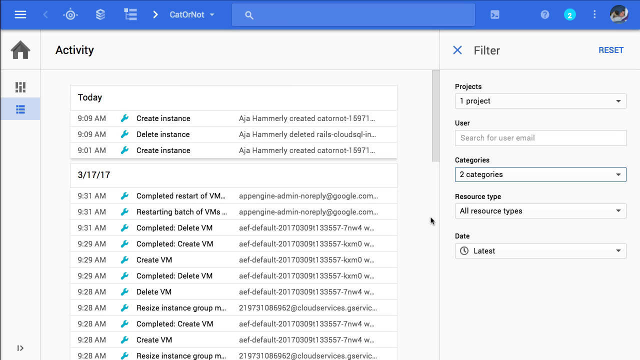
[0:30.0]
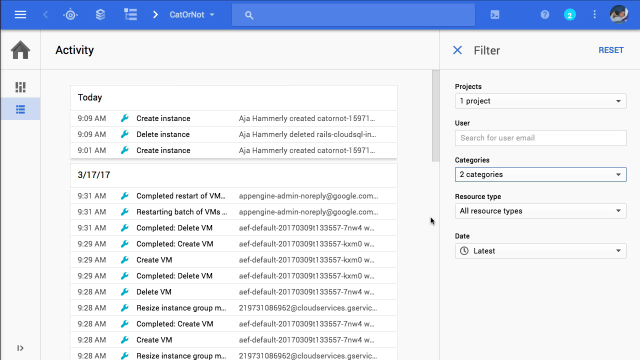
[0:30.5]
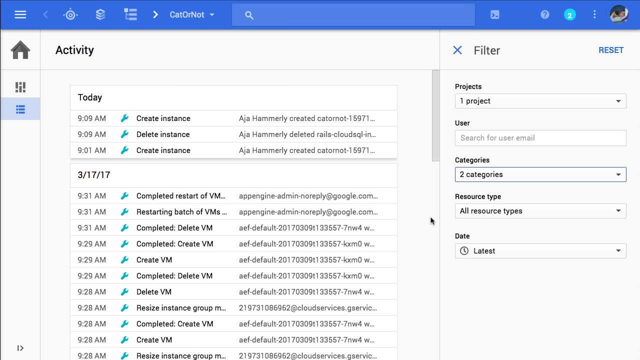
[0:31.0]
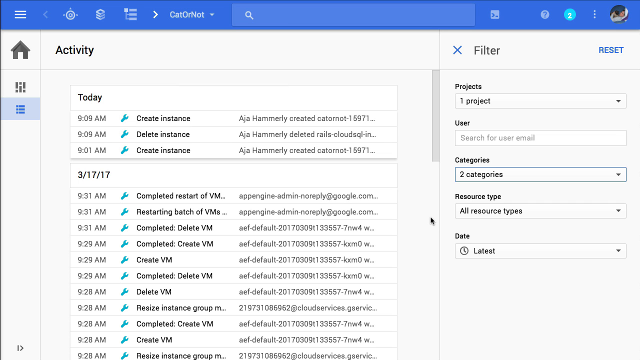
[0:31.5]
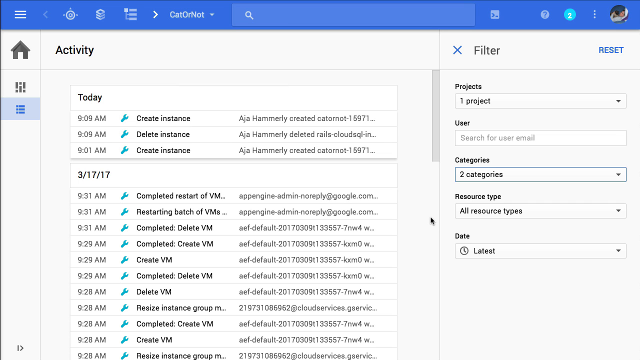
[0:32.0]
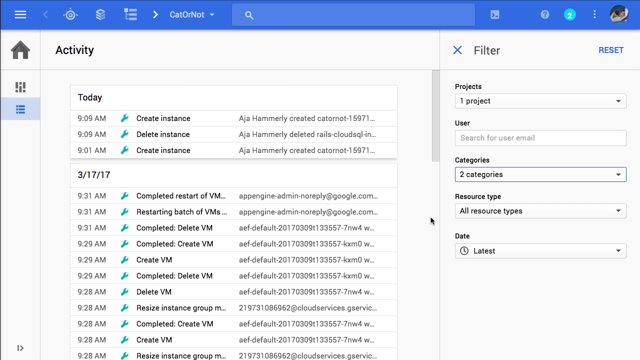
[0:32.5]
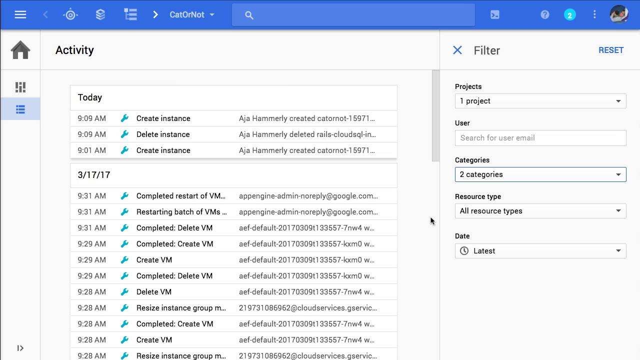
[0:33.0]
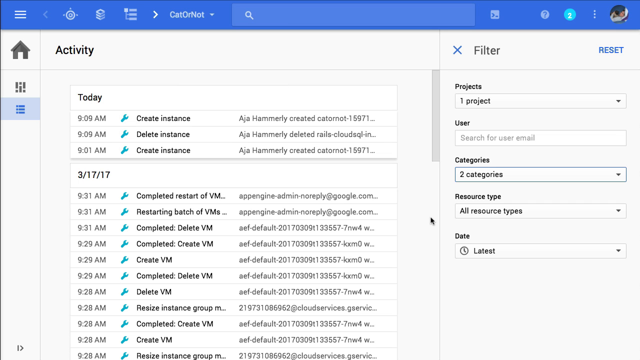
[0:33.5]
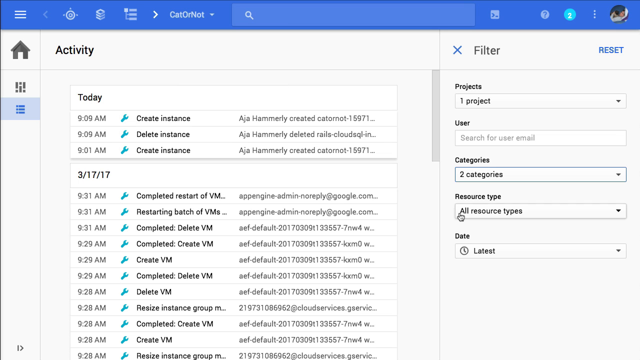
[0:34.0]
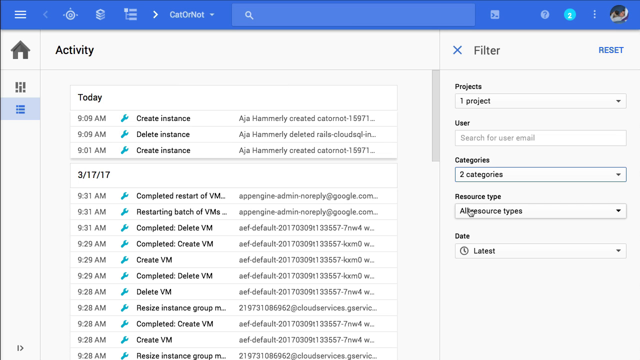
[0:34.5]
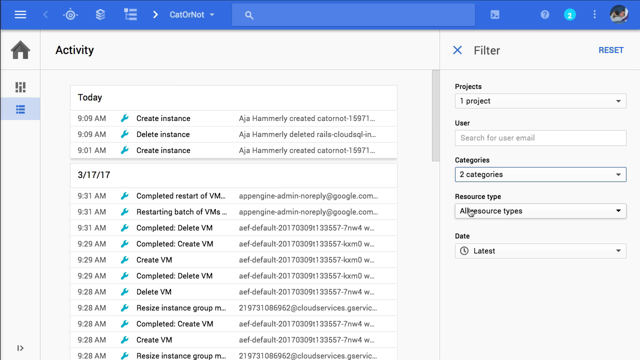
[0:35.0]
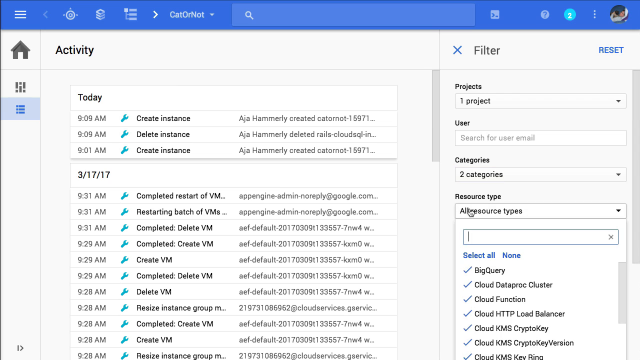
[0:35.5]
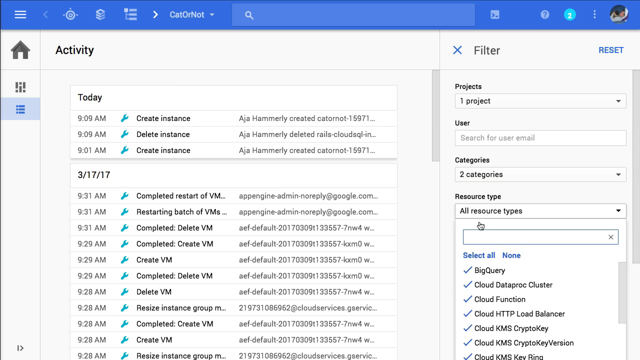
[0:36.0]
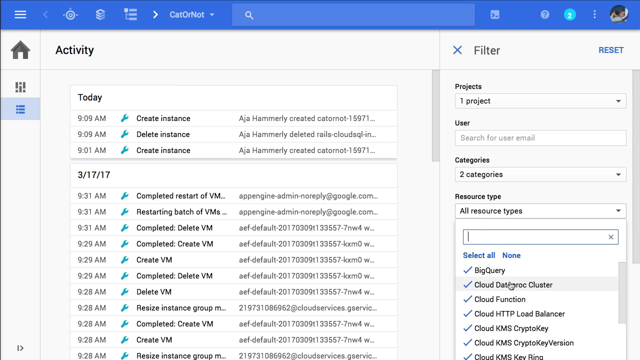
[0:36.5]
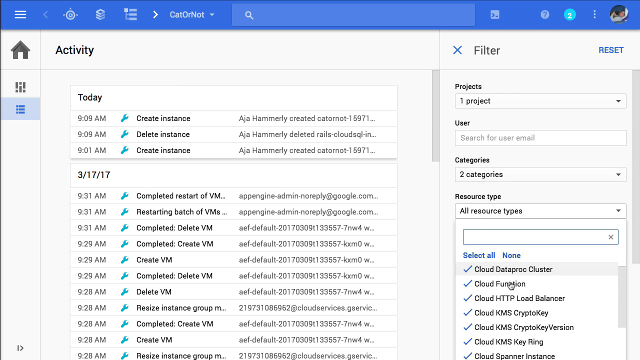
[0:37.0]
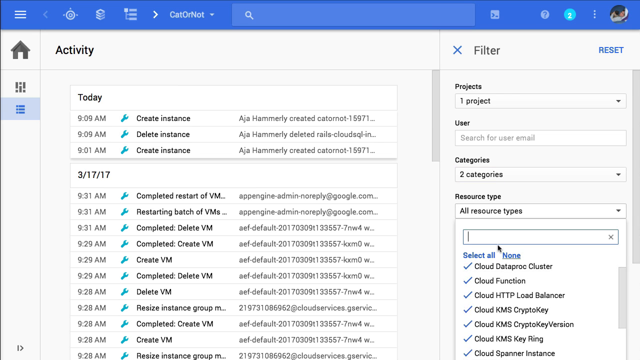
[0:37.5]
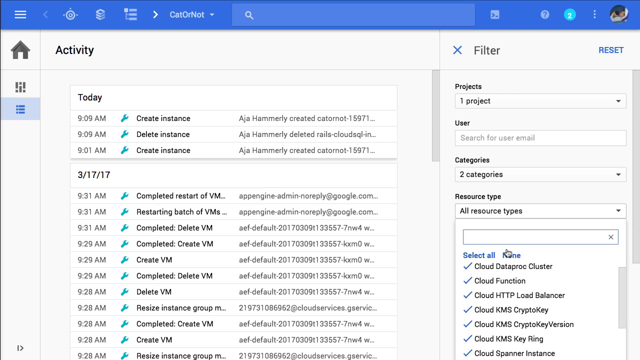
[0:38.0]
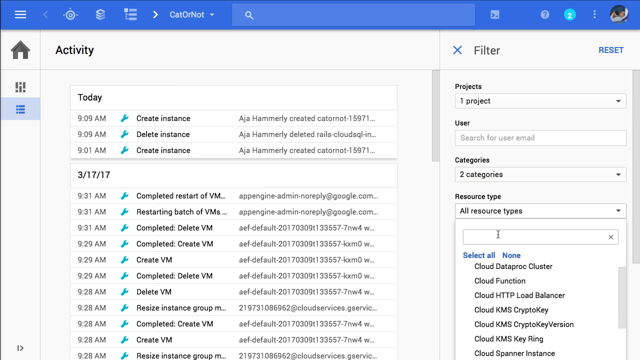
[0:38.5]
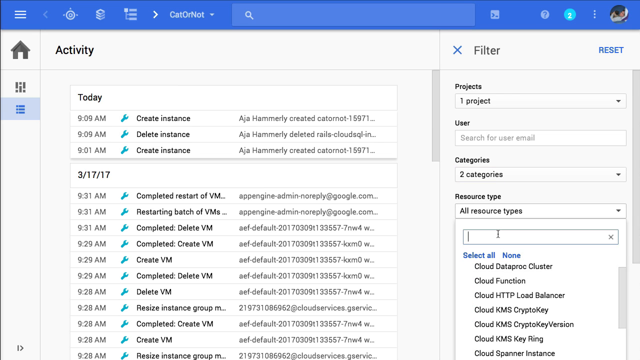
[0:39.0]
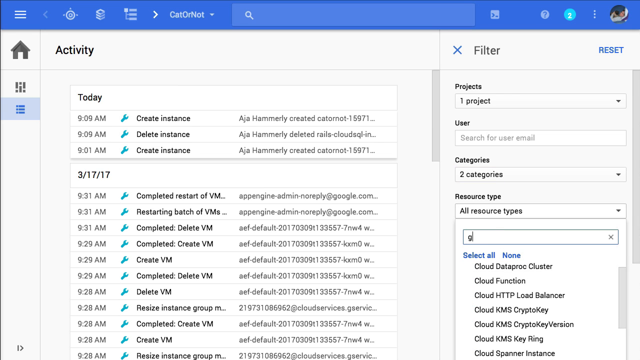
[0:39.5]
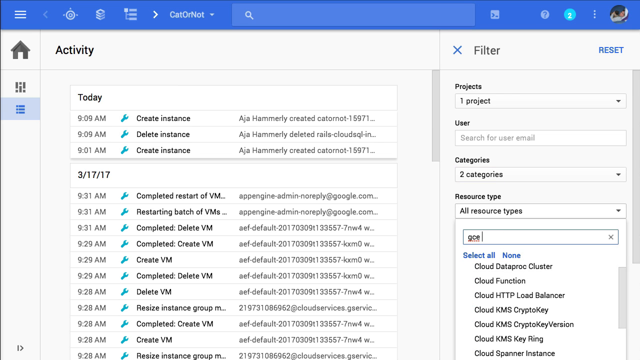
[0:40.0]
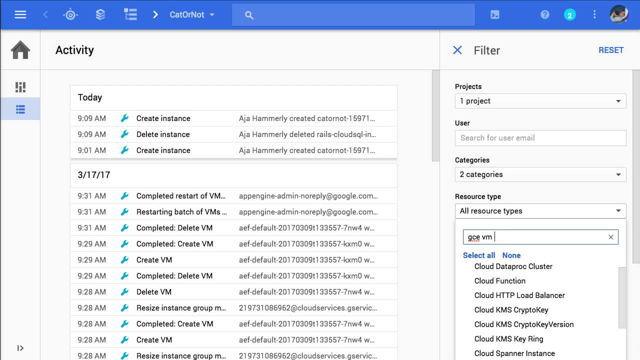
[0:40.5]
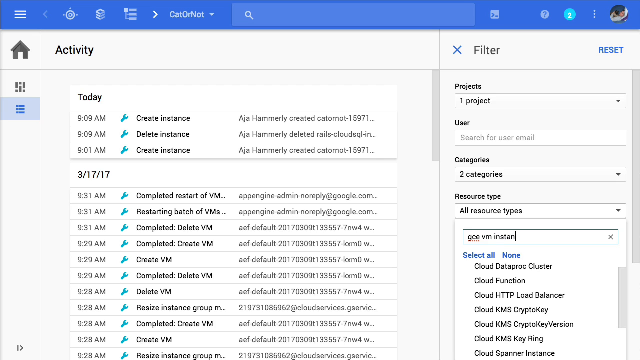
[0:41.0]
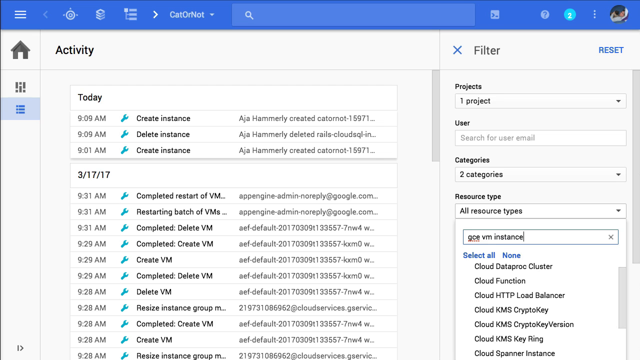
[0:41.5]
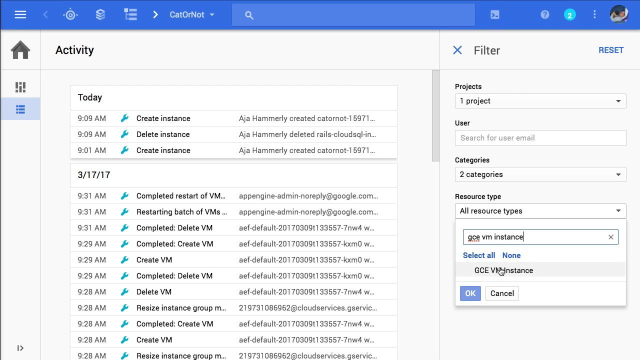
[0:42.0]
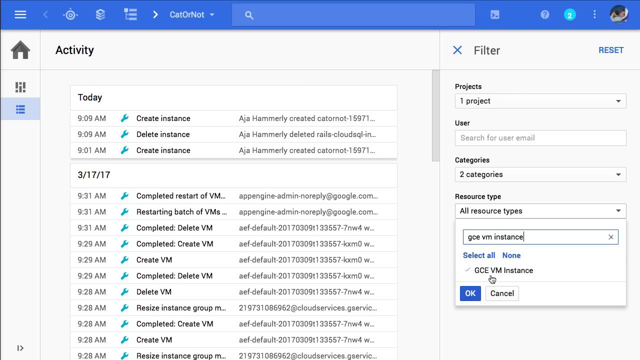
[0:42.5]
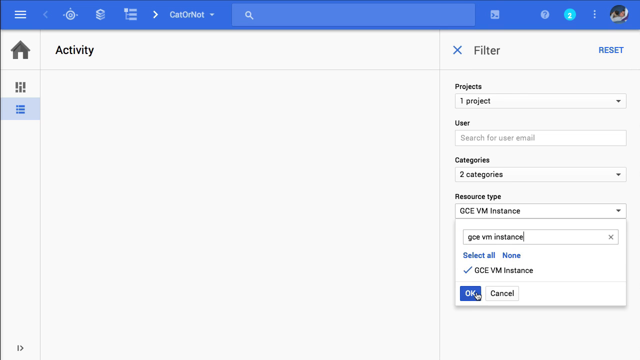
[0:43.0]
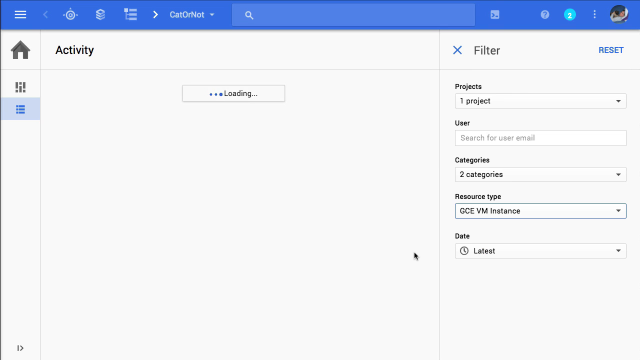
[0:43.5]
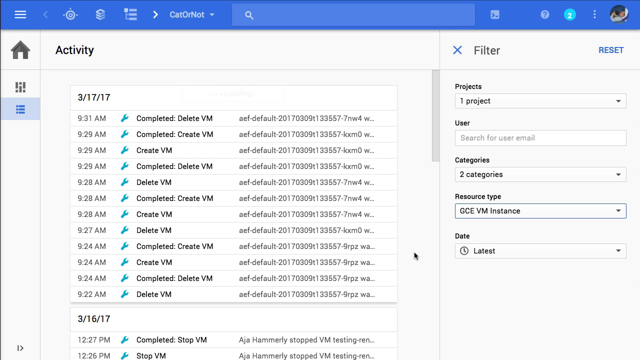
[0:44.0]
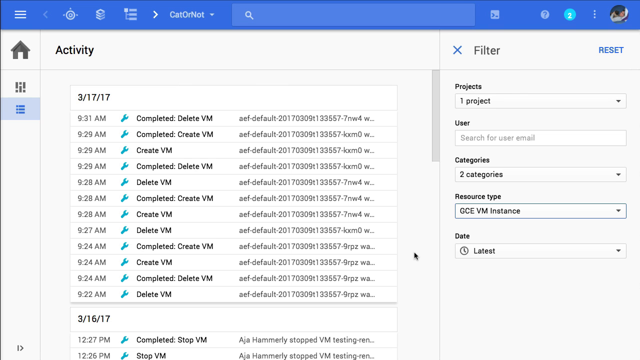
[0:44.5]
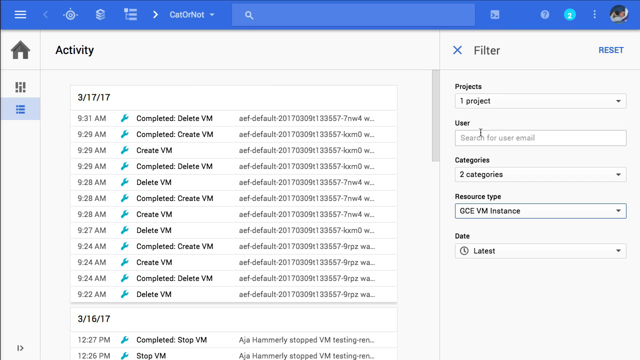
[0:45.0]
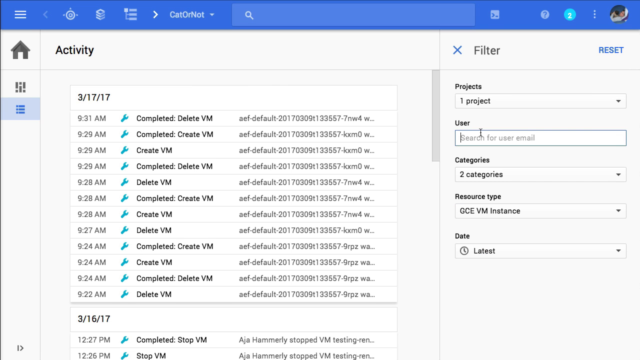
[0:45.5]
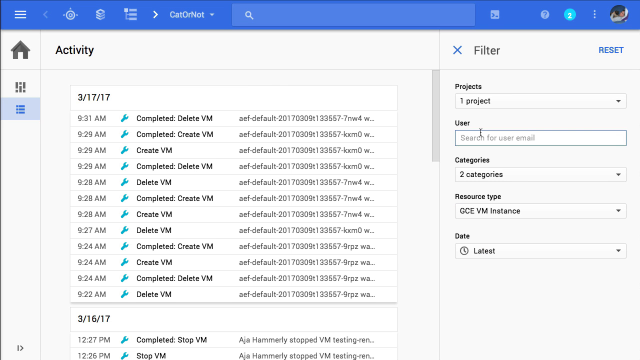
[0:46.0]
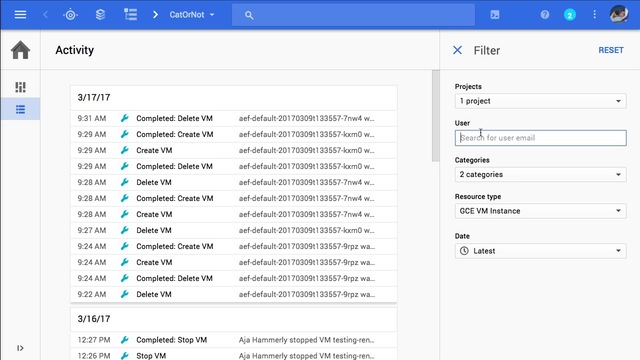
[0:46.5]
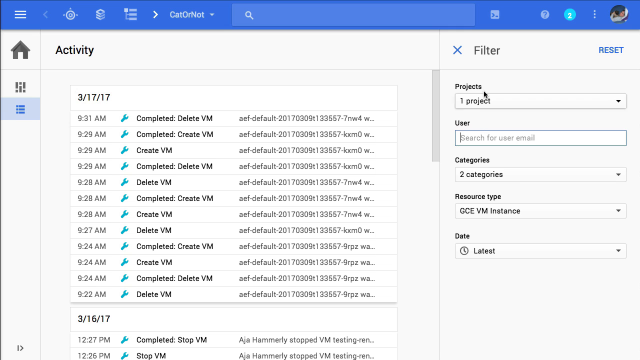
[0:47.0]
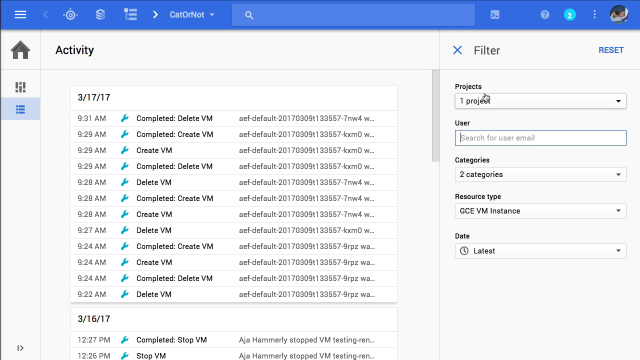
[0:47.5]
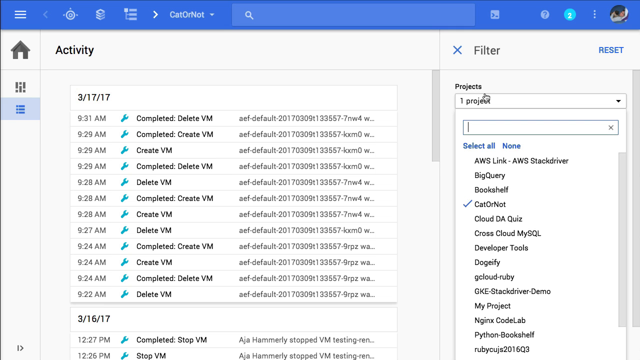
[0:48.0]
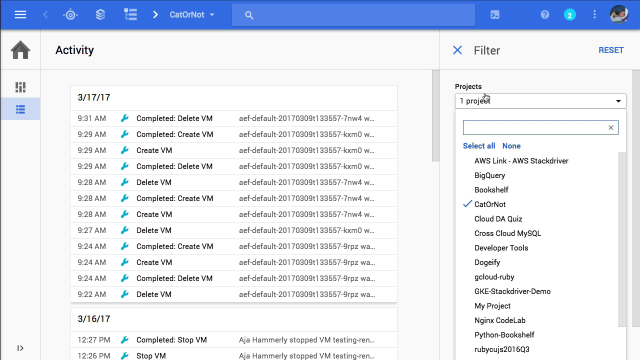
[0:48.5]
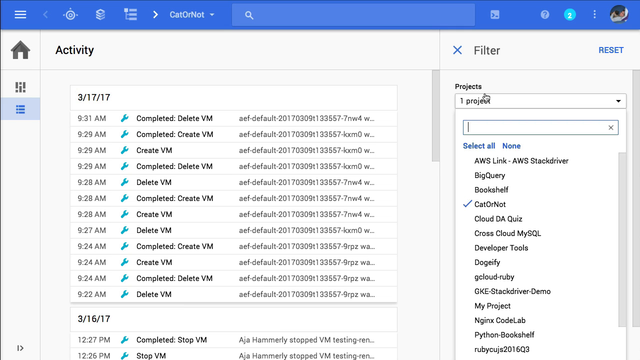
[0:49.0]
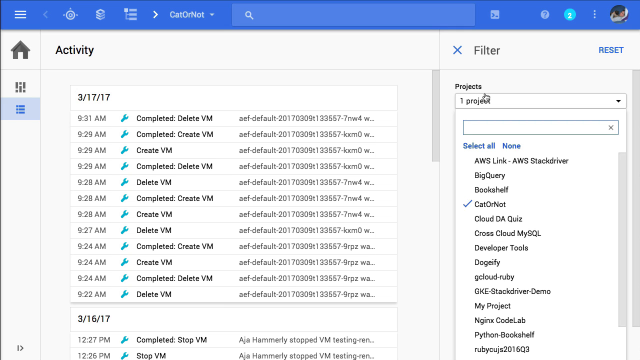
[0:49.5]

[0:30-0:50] The activity category is shown, and the filter is used to find a past activity: a name is entered under resource type and searched, and there is also a way to search by project.